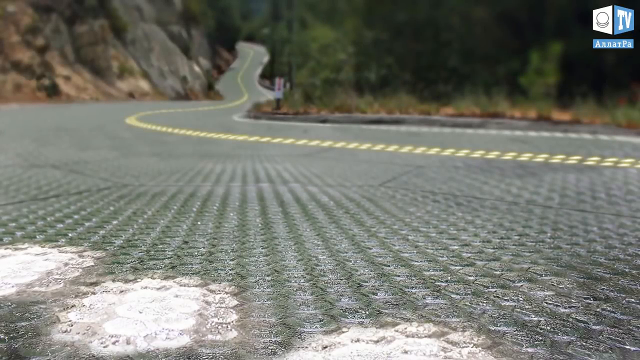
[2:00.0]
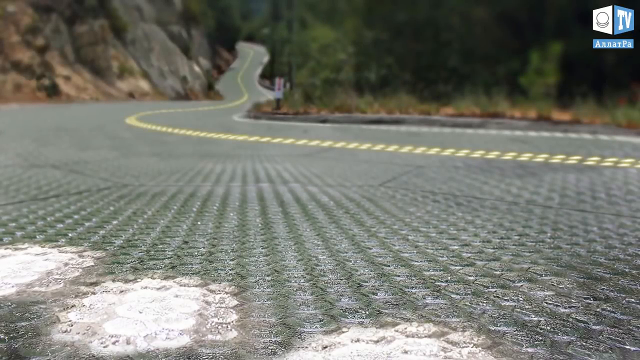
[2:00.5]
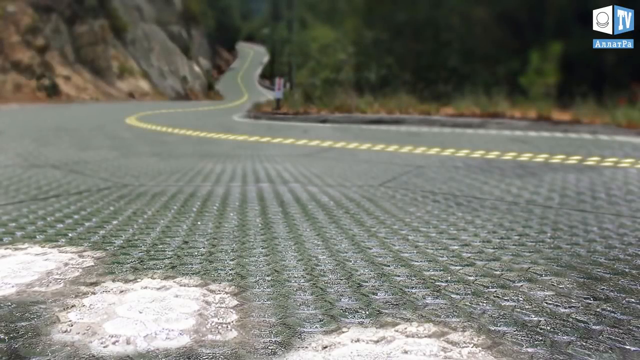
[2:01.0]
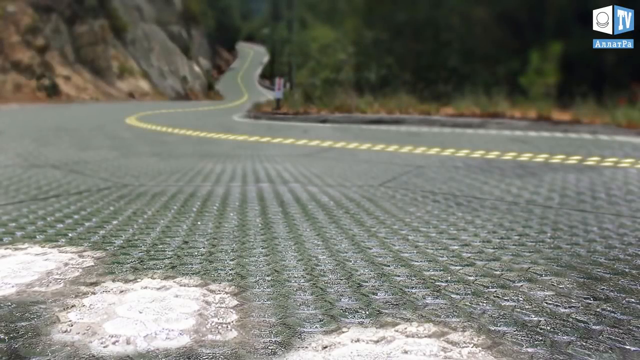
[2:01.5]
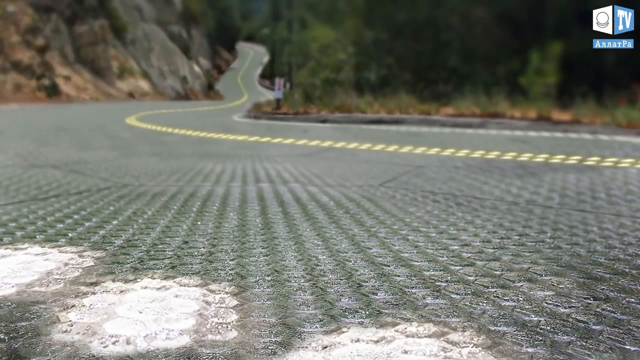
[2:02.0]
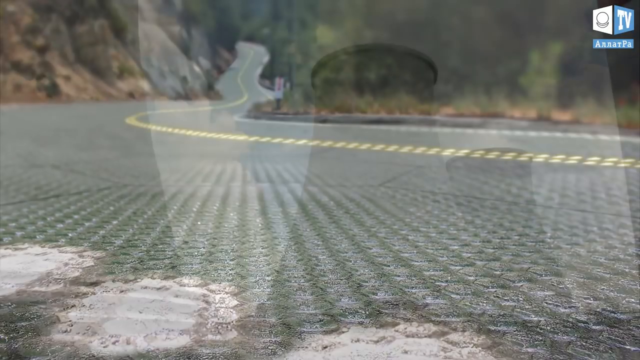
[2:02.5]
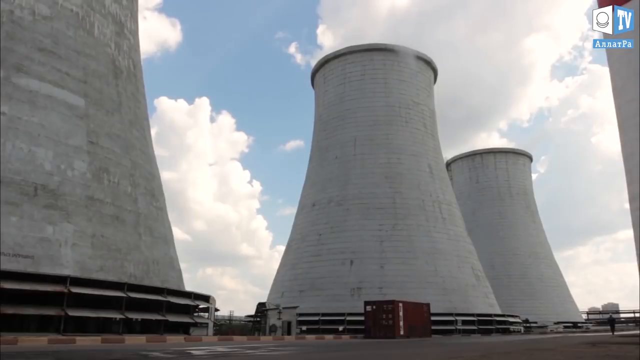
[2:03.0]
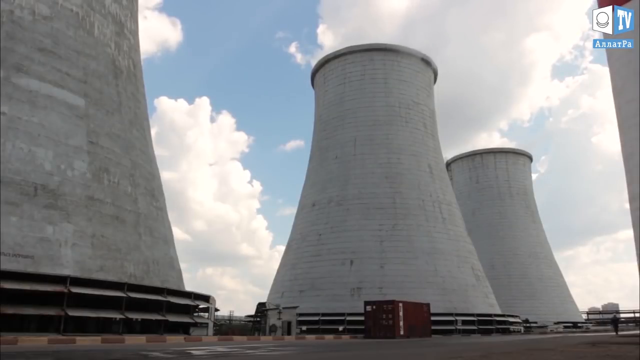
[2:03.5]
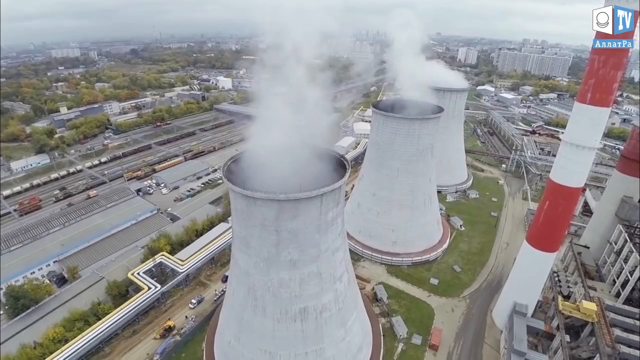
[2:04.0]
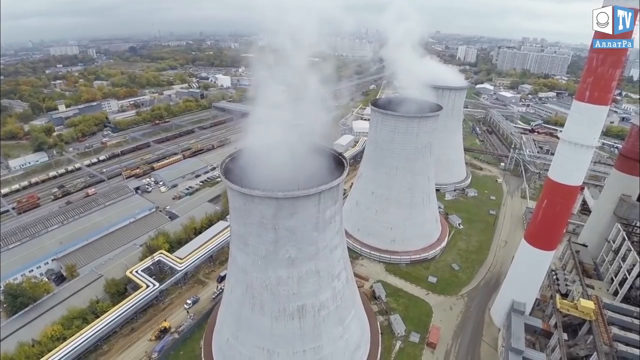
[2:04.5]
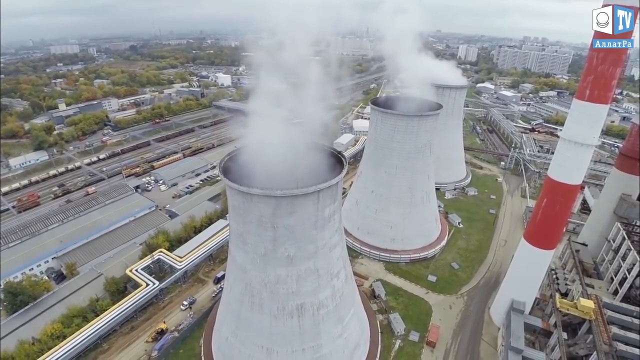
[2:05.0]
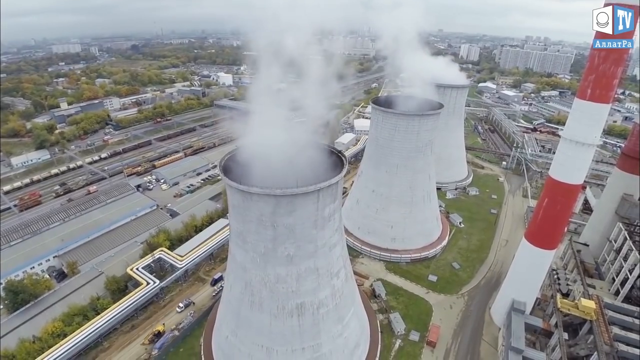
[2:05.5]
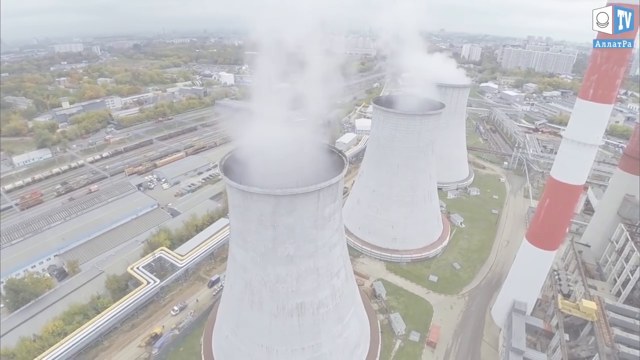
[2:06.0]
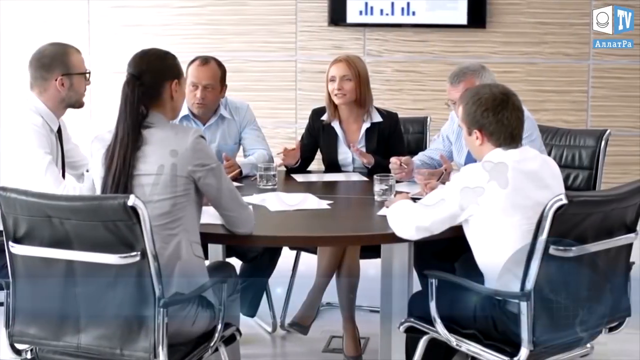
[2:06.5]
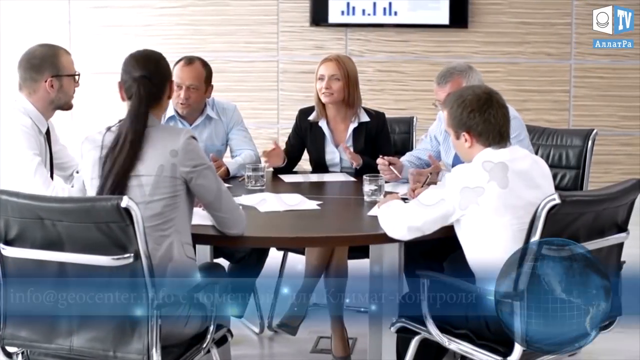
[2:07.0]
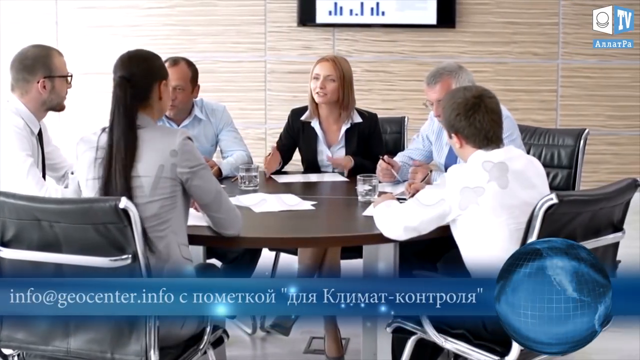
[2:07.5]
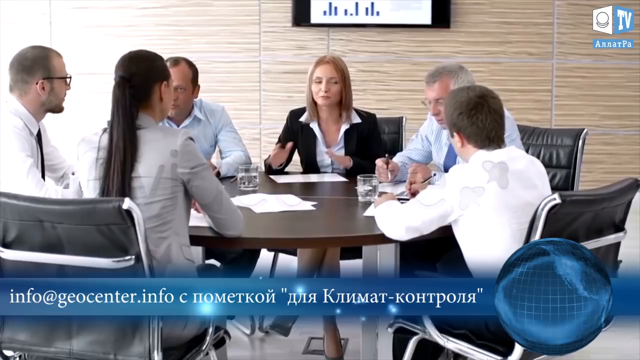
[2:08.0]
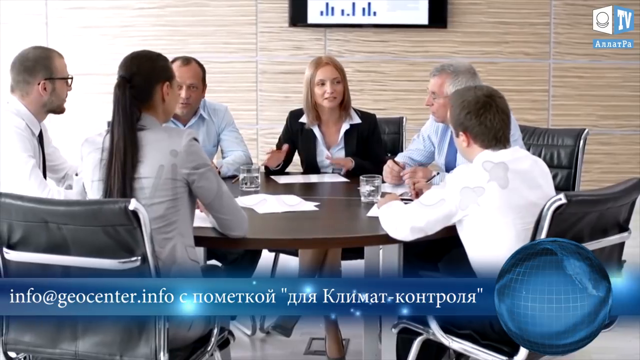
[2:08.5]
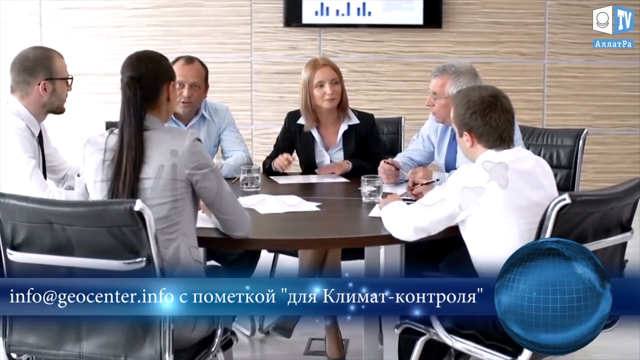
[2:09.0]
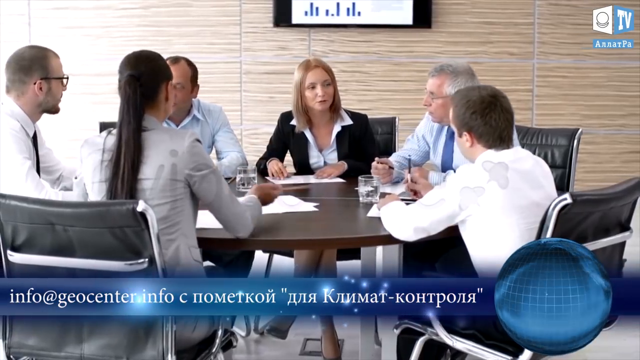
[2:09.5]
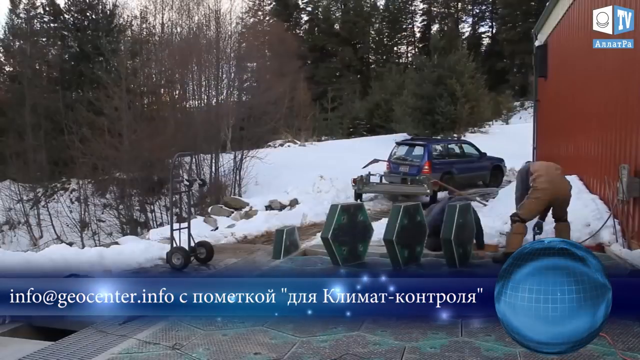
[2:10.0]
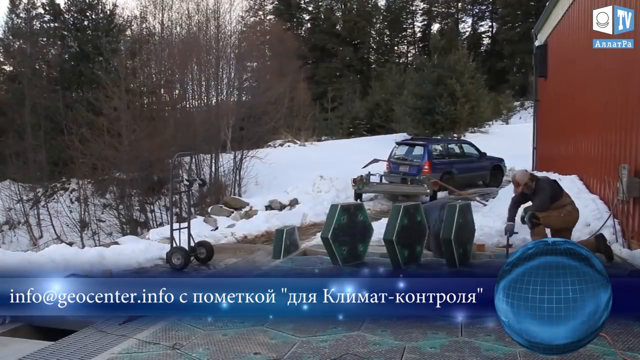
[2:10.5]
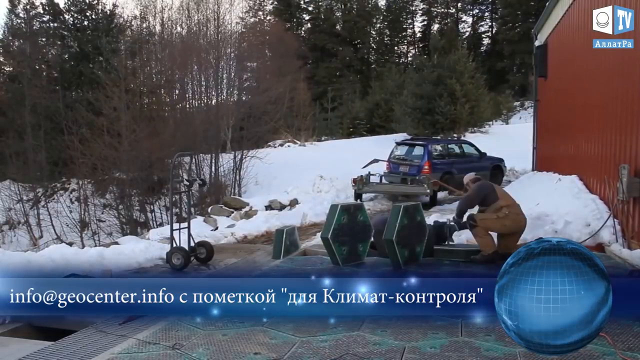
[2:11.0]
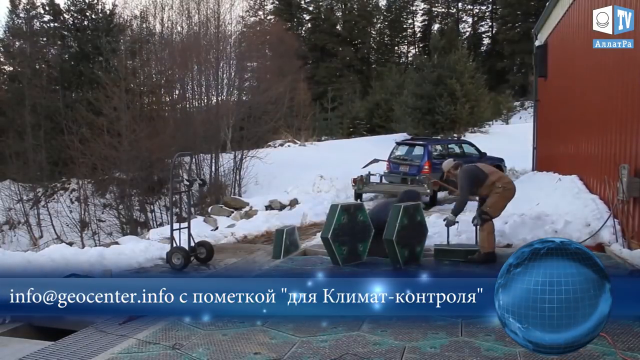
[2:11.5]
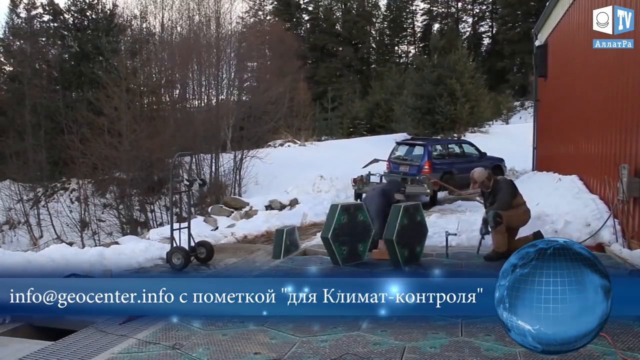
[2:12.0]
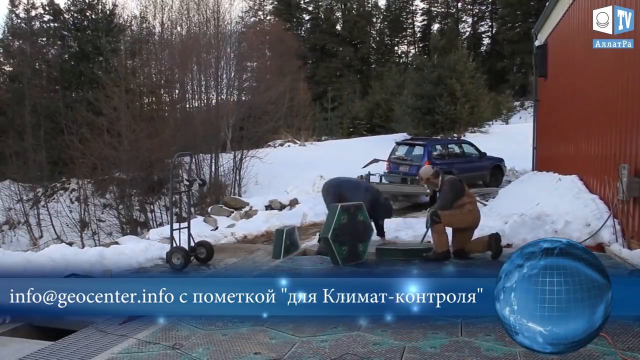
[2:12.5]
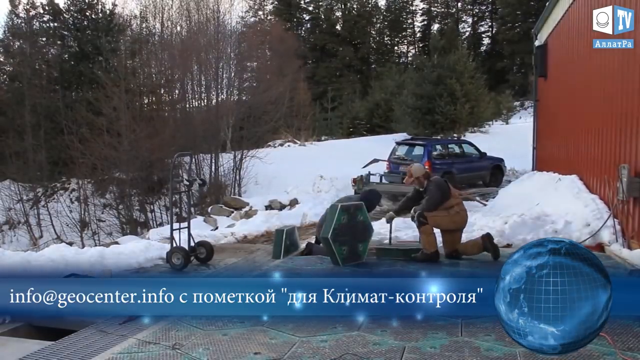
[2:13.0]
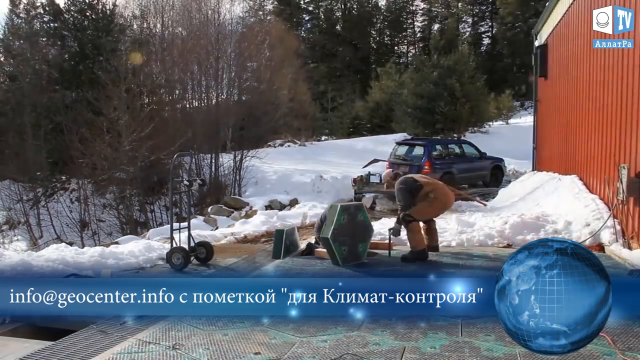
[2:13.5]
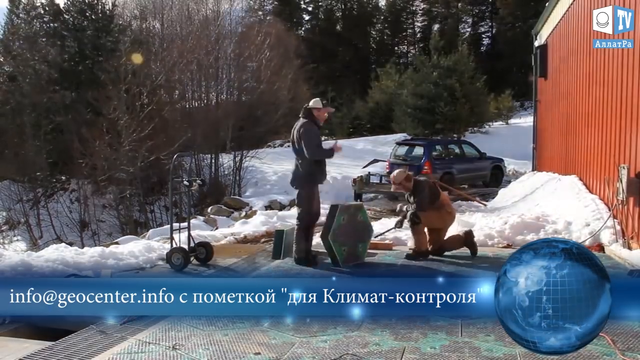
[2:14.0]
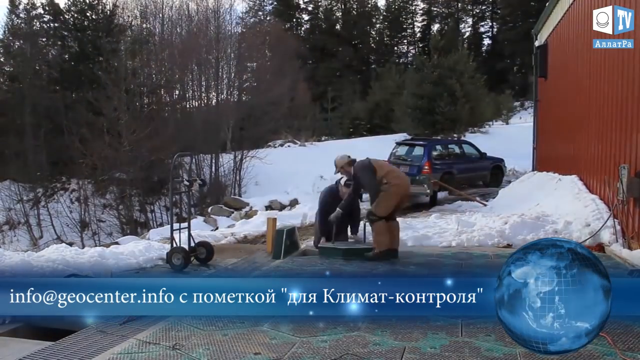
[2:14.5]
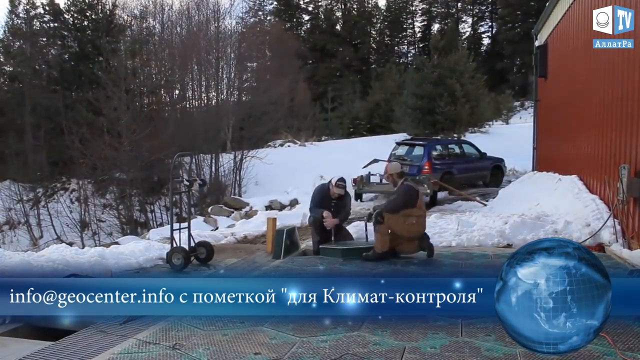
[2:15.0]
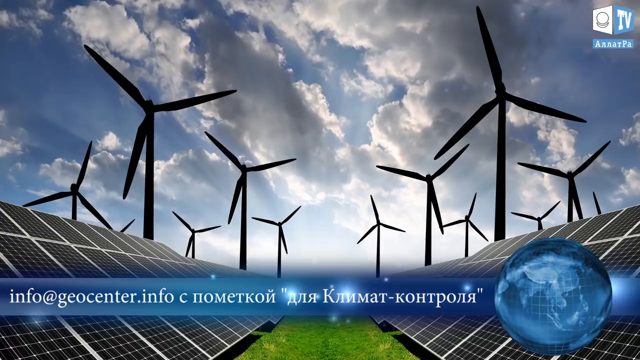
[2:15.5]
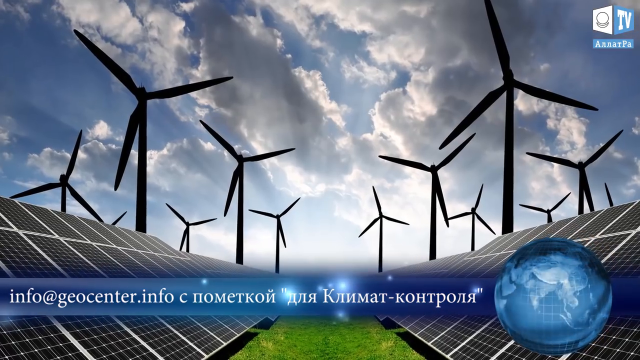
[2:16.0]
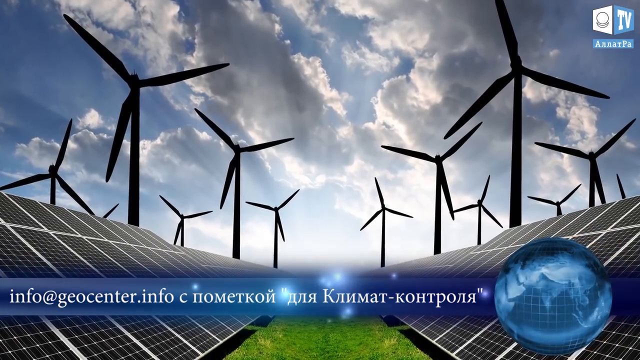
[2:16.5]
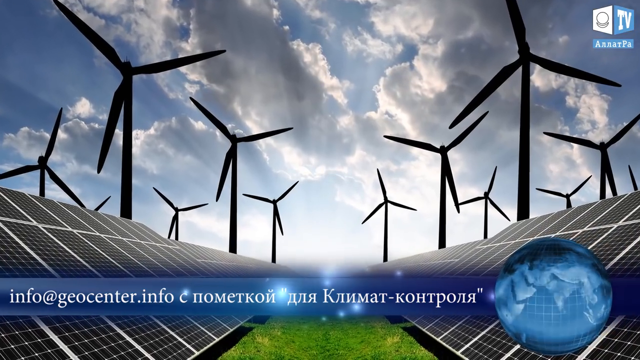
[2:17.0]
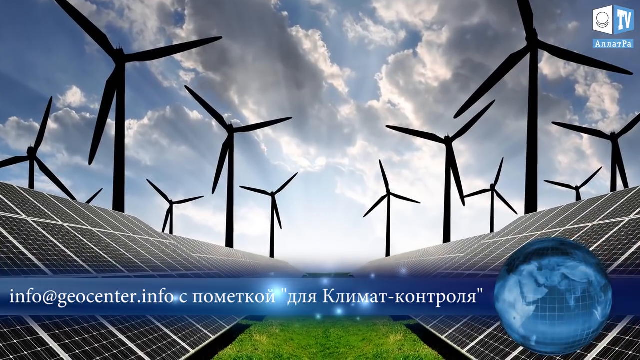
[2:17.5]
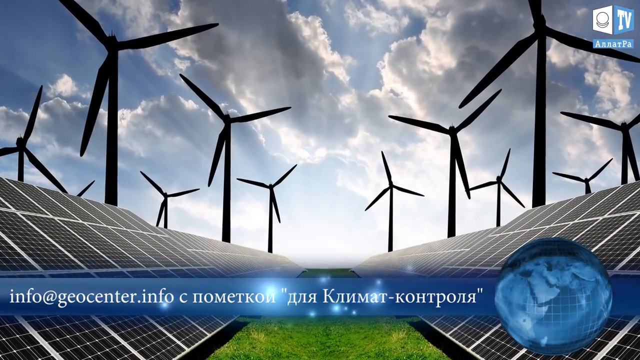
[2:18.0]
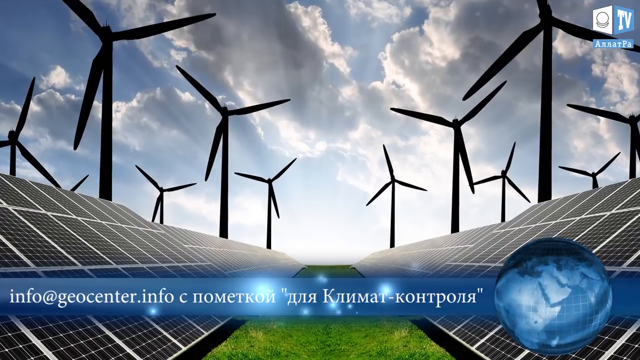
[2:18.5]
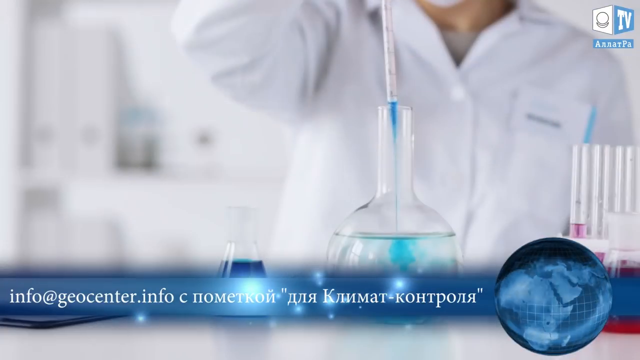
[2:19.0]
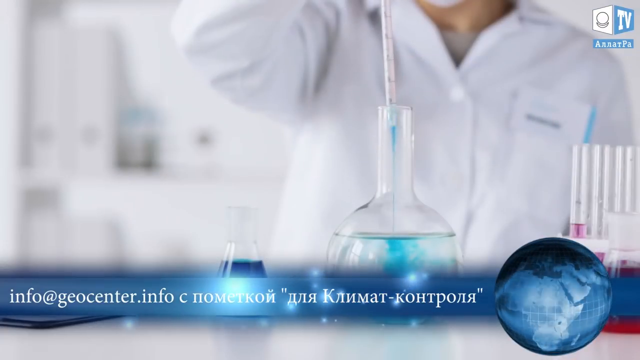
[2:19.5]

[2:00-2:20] The bubble letters appear with the homes in the community. There is some tan thing in the front. The man drags the rubber pieces and lays them down on the asphalt, wearing work boots. The red home has a white door and a window with a black tube sticking out. Tons of pine trees are behind them, along with a fence. The woman smiles and the man talks. There are a bunch of cars. A desolate highway, an abandoned parking lot and an abandoned city alleyway appear. There are lots of octagons, with lots of metal and bubble plastic in the background; it looks like little octagons were made on an octagon. An animation shows a road and an intersection, with an all-black sky, asphalt, cars, and four intersections. The green road is shown. An interstate has about five or ten cars going in both directions, with lit-up lights in the middle and a median. It is dark out, and the cars have their lights on.